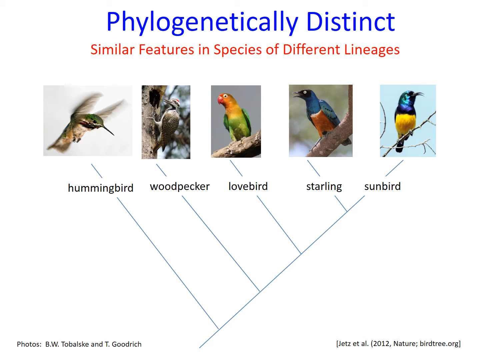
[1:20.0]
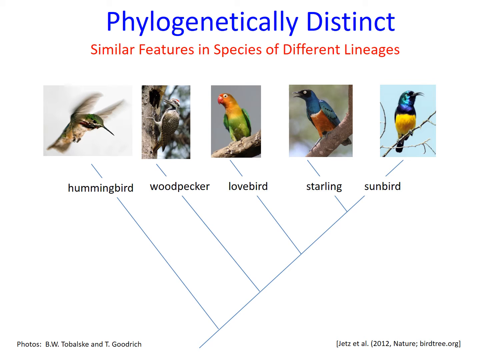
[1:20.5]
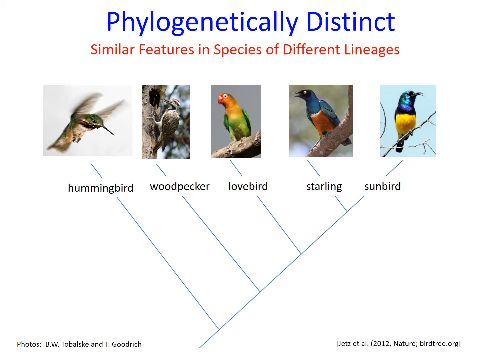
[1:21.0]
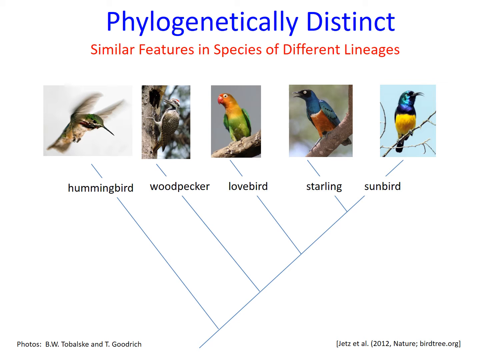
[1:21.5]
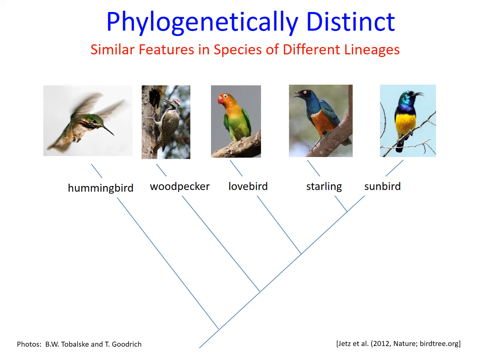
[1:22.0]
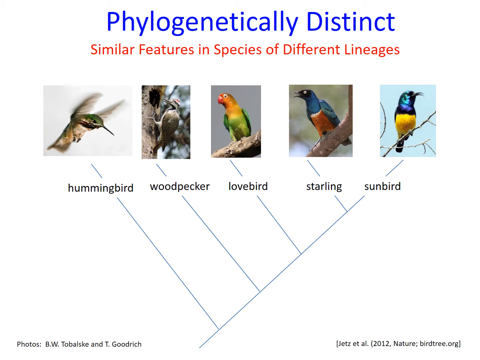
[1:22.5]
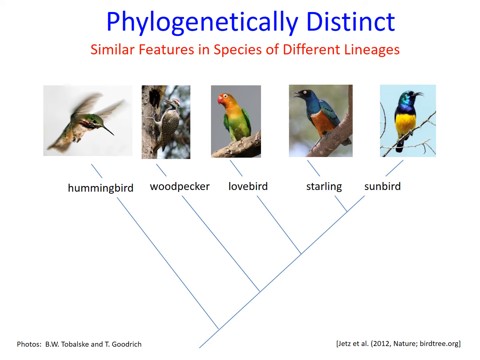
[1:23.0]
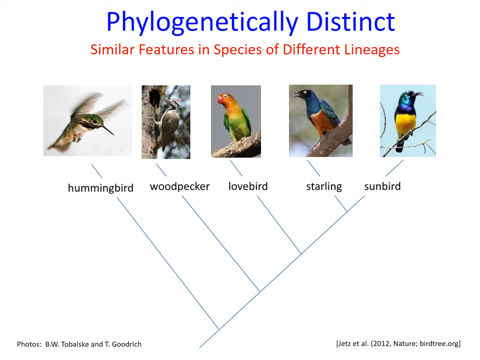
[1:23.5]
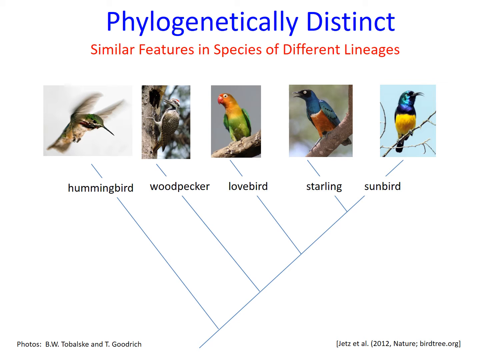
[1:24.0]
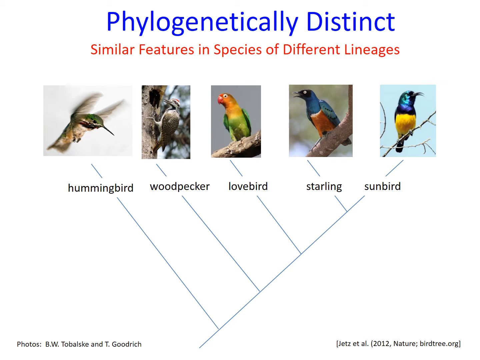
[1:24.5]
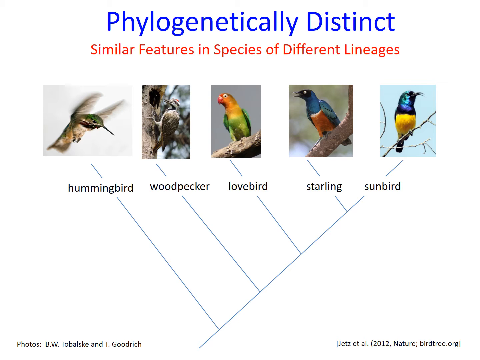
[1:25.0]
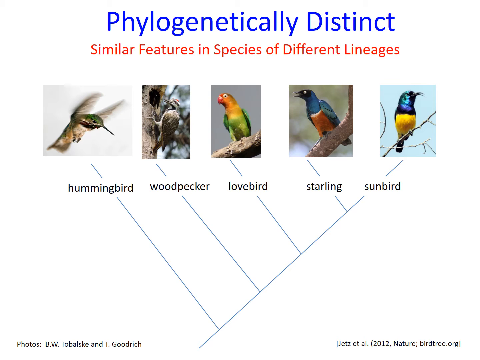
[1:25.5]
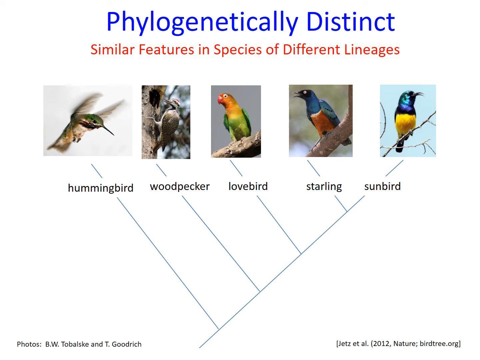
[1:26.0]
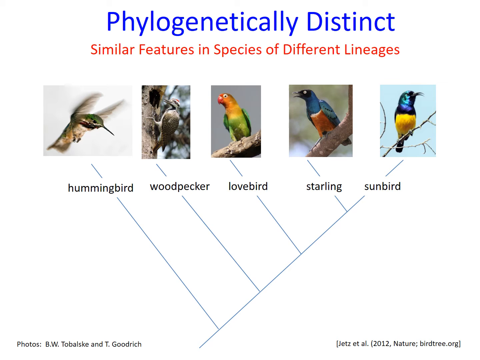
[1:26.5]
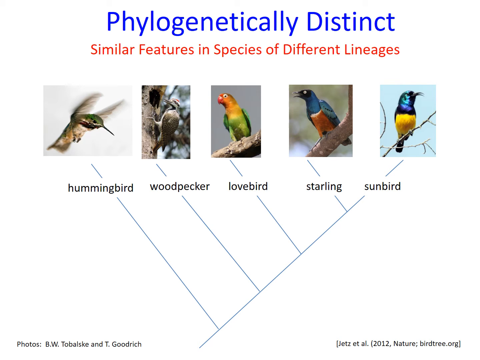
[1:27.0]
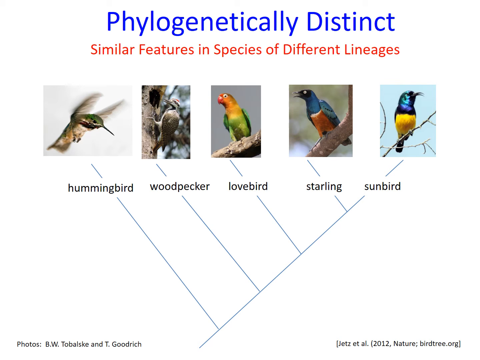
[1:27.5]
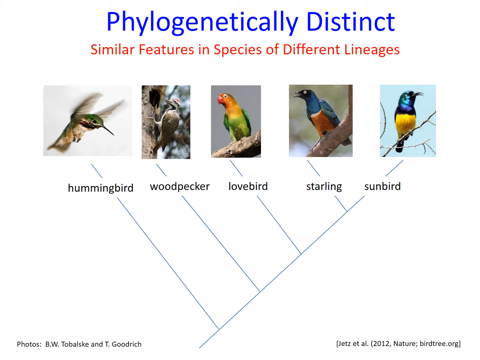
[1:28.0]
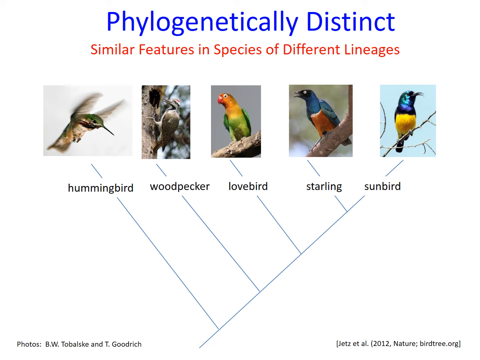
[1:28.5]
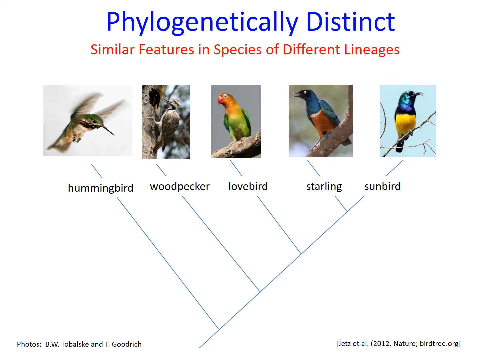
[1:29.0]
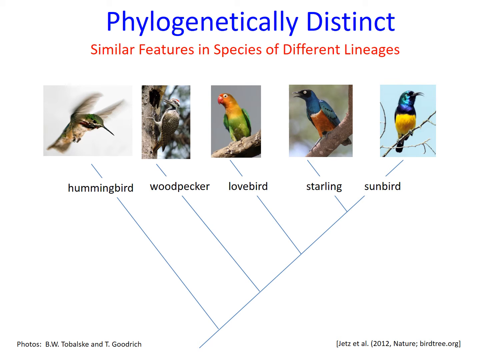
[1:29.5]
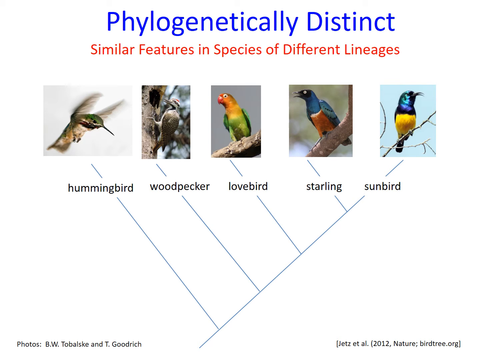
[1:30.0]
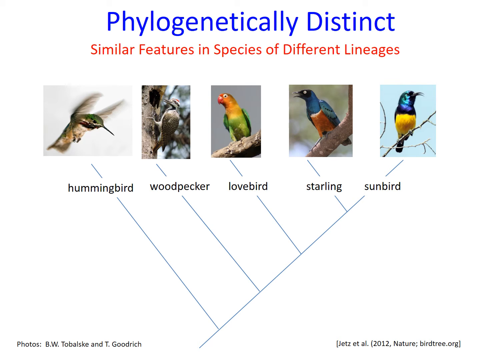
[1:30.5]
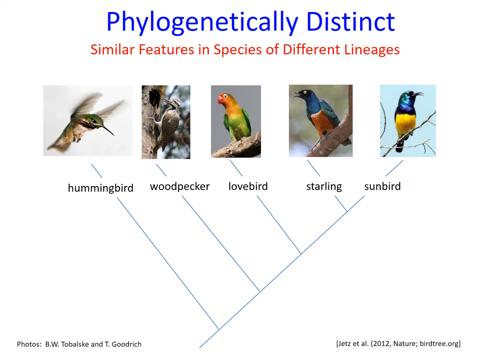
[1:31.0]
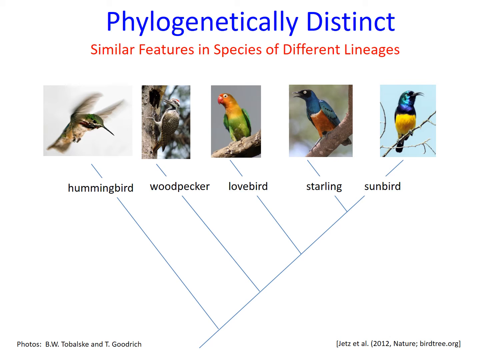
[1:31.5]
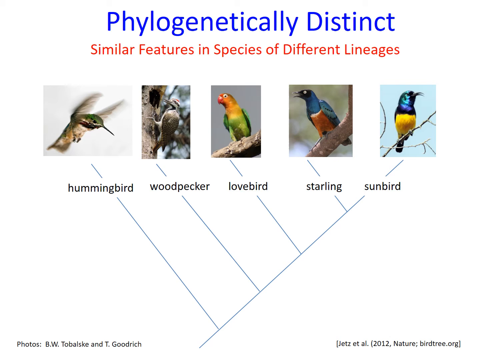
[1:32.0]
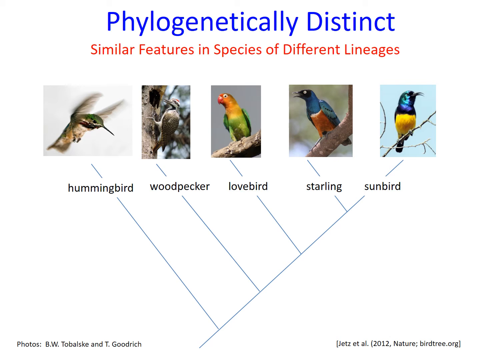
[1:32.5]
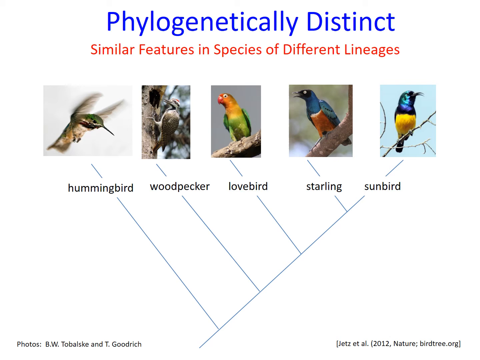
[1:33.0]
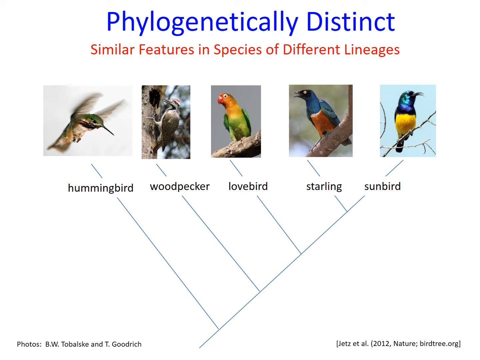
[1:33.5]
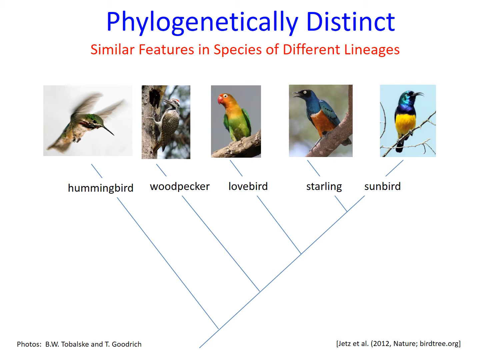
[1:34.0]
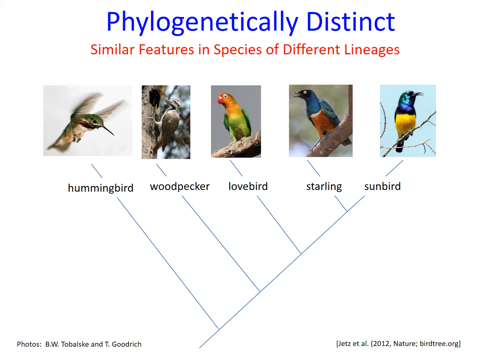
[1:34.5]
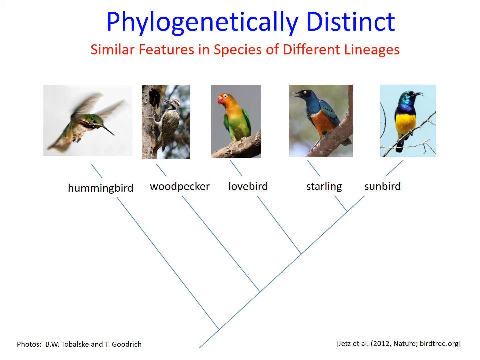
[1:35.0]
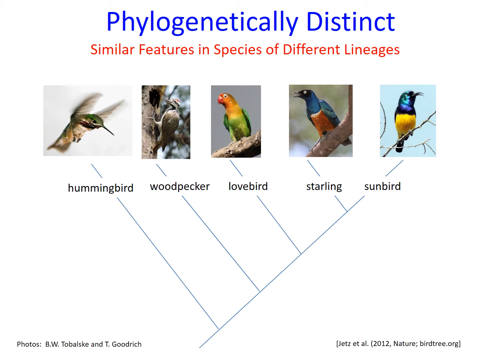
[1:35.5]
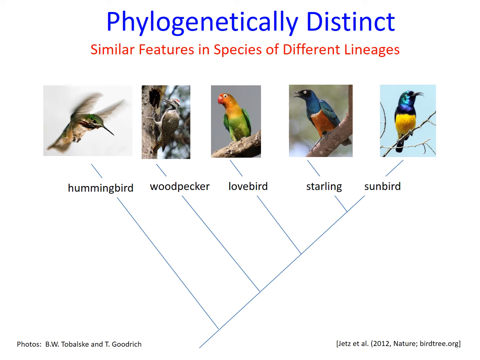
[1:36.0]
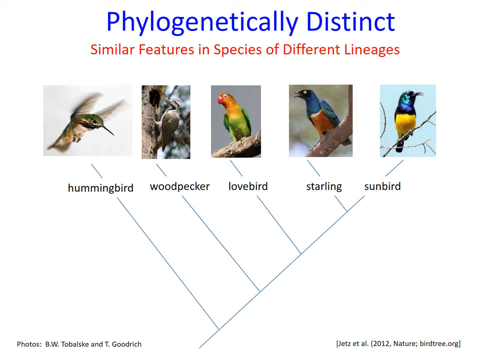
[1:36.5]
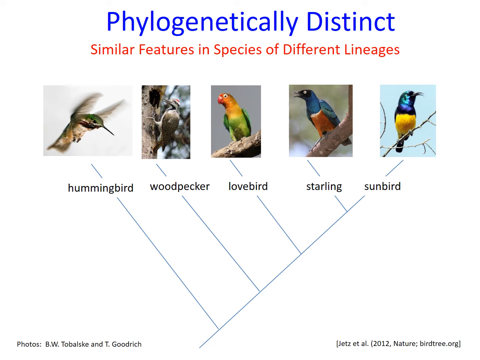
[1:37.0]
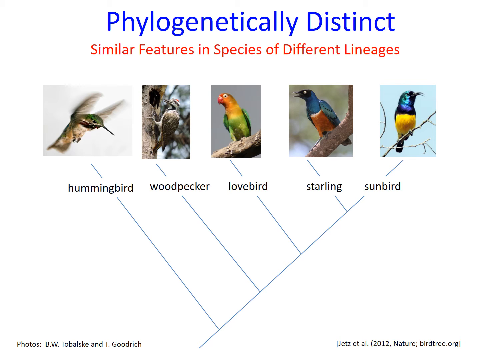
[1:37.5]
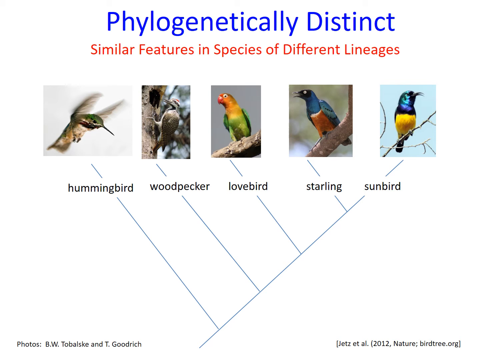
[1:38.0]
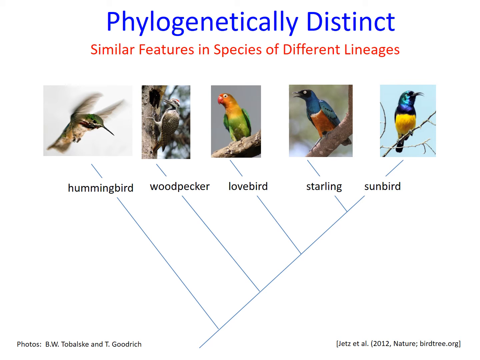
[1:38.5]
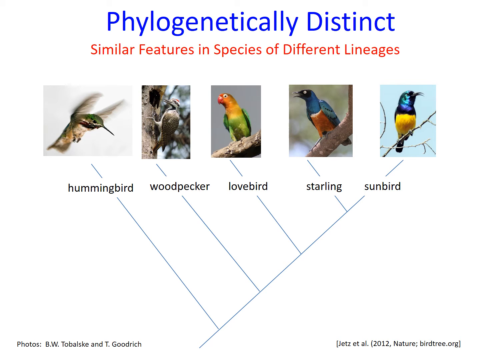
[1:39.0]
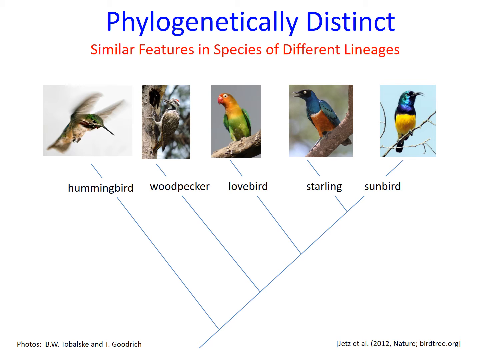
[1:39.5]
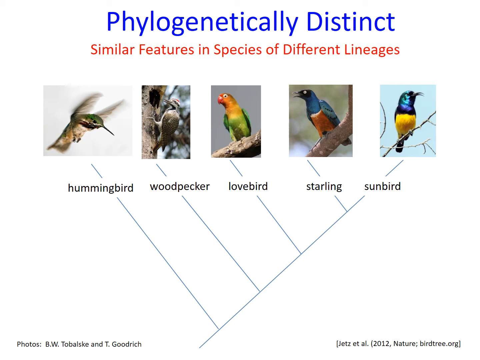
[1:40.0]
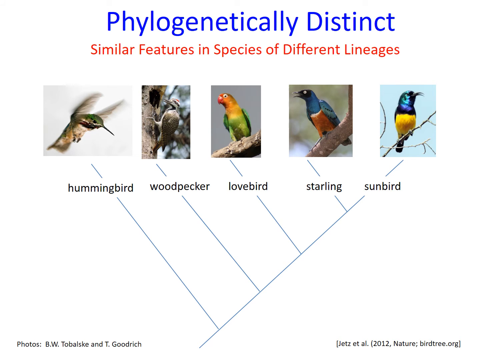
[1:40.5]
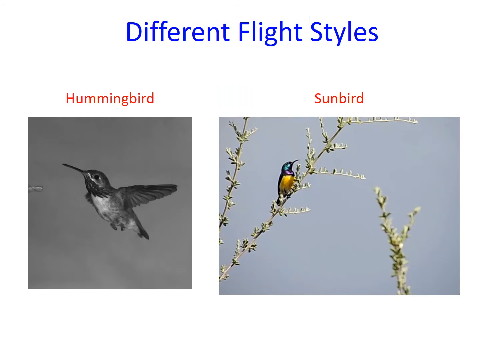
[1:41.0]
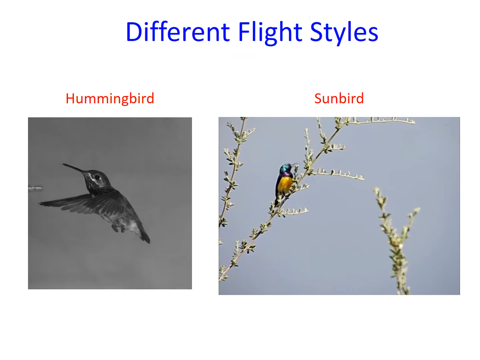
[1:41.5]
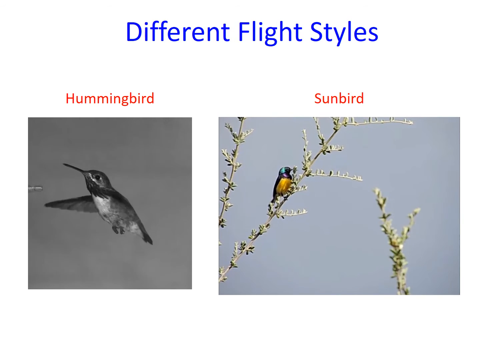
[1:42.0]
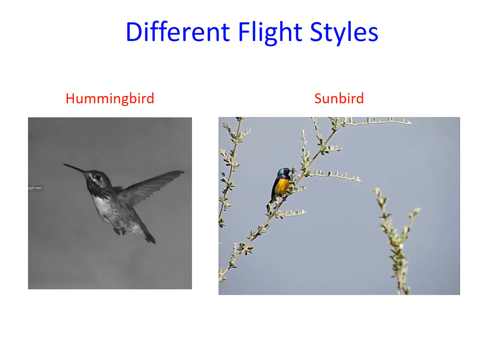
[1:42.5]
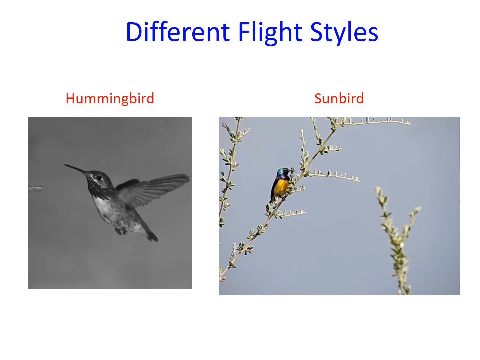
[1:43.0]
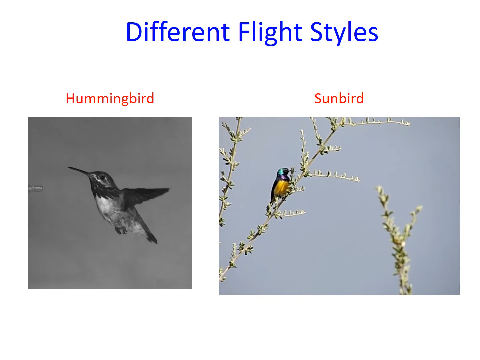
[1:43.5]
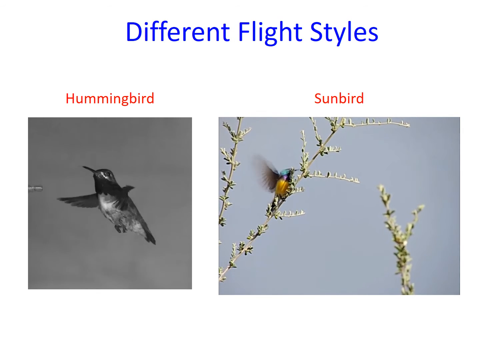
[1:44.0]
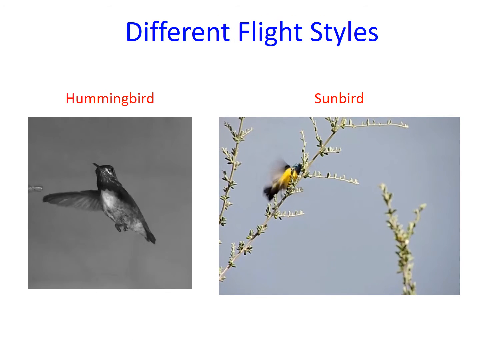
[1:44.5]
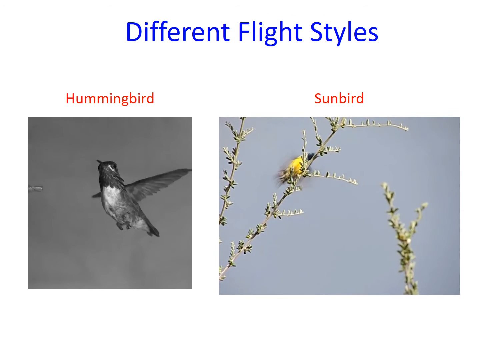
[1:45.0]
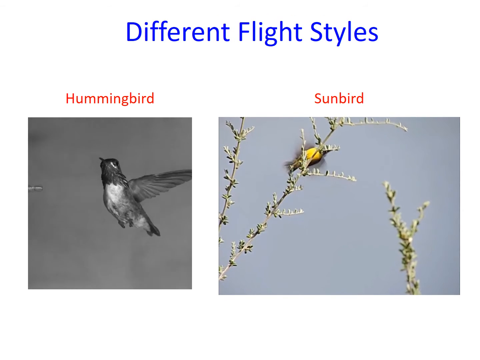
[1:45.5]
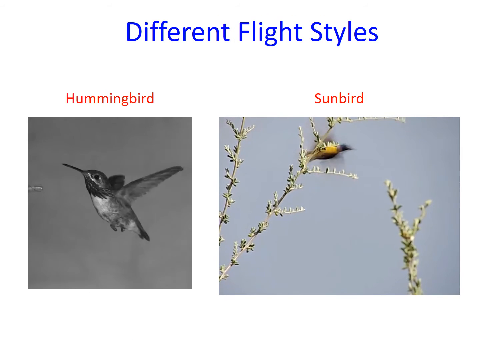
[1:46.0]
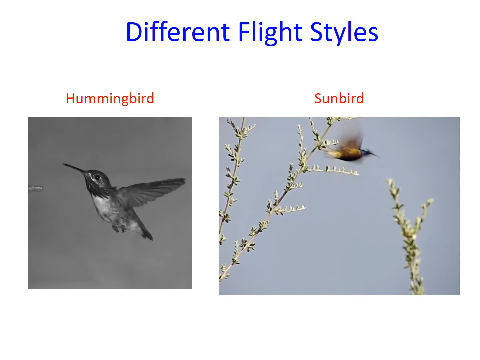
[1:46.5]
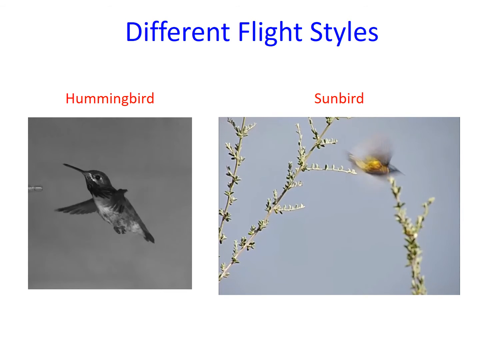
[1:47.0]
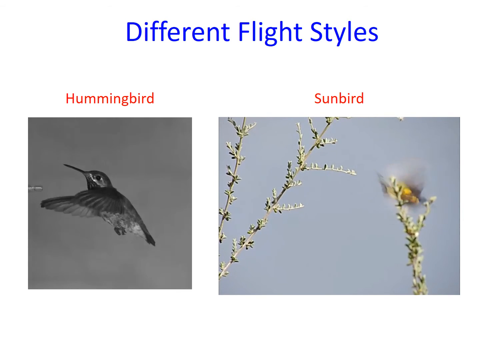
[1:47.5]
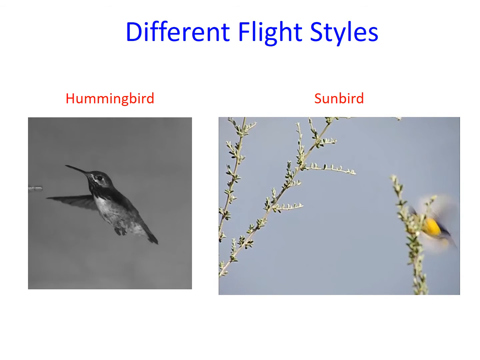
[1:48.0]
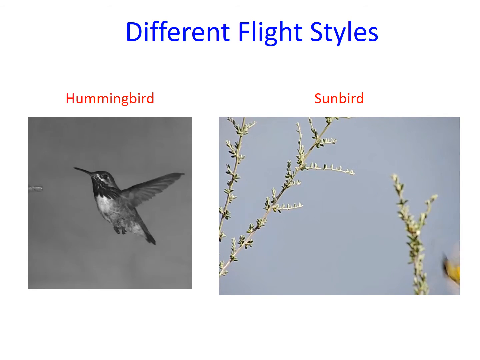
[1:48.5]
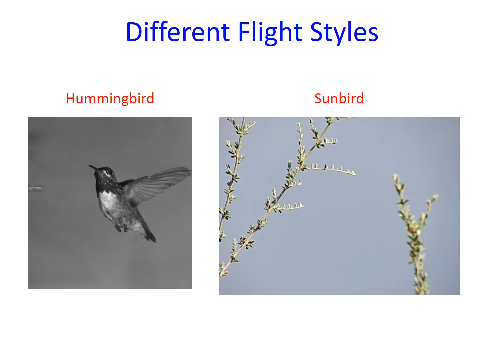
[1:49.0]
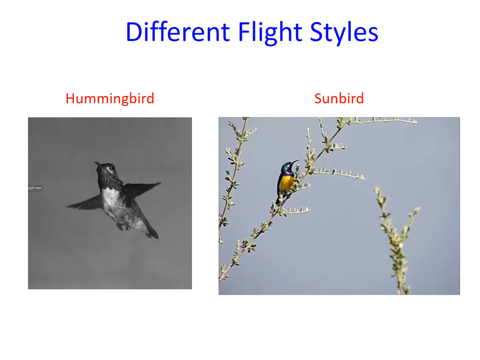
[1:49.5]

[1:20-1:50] Text at the top reads "phylogenetically distinct." Birds from different lineages are shown with different flight styles: the hummingbird flaps its wings, while the sunbird flaps its wings in a different way, contrasting how the birds move their wings.